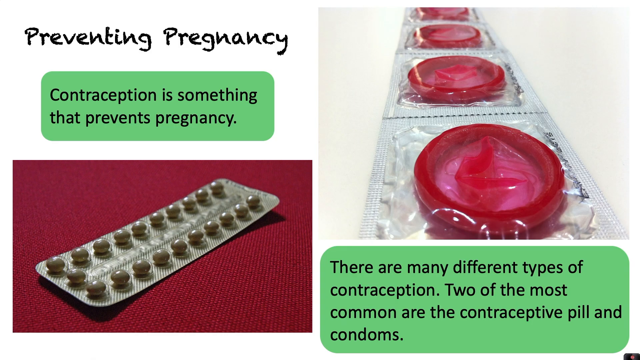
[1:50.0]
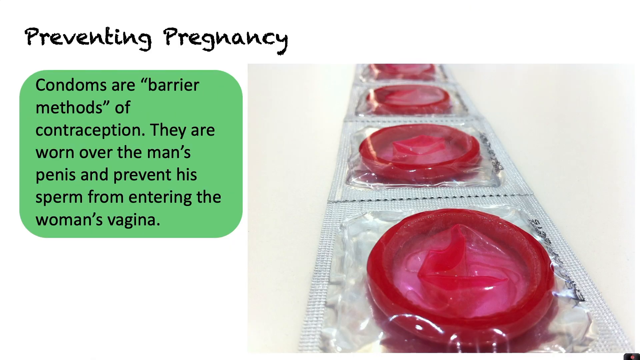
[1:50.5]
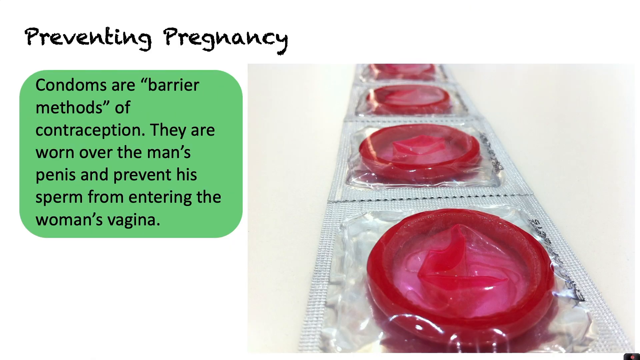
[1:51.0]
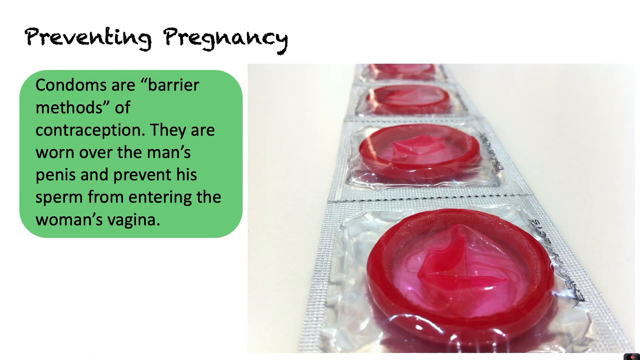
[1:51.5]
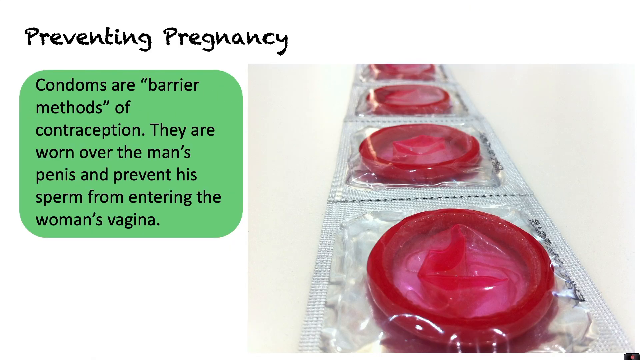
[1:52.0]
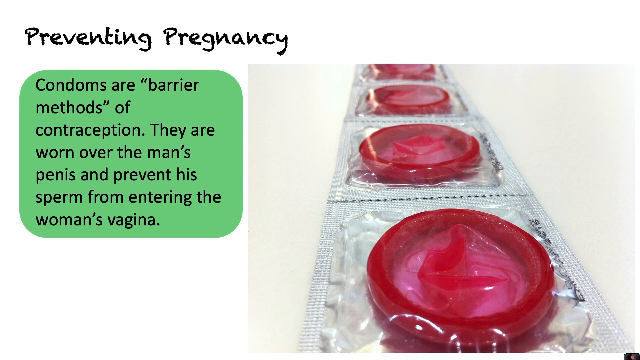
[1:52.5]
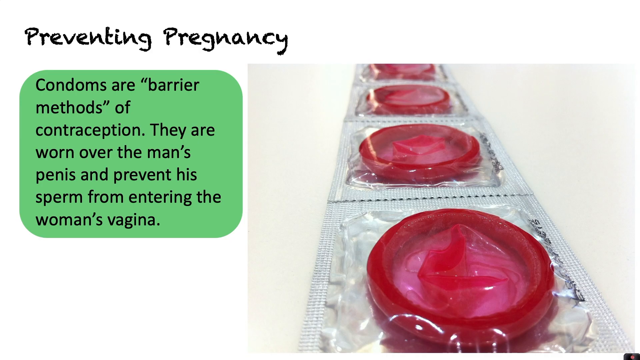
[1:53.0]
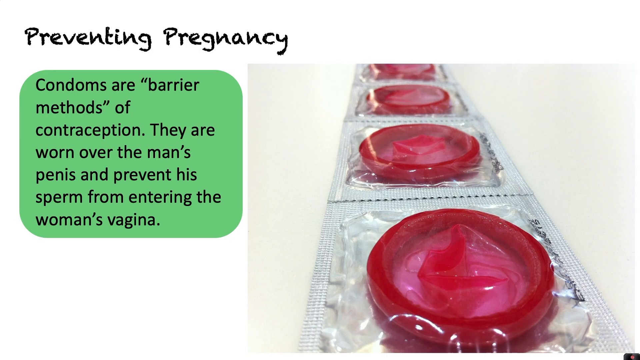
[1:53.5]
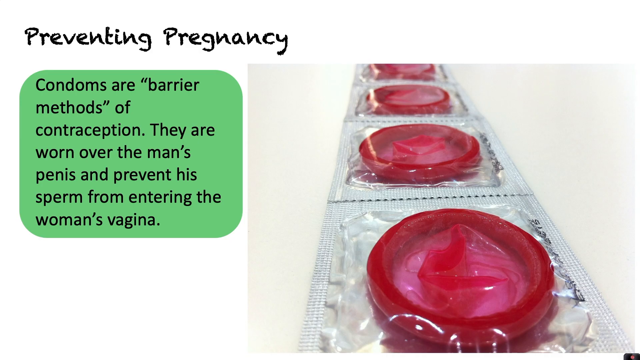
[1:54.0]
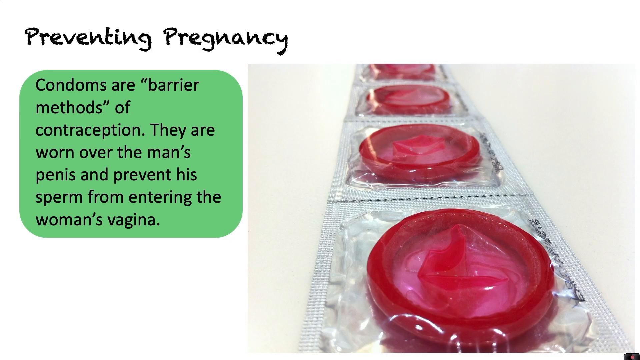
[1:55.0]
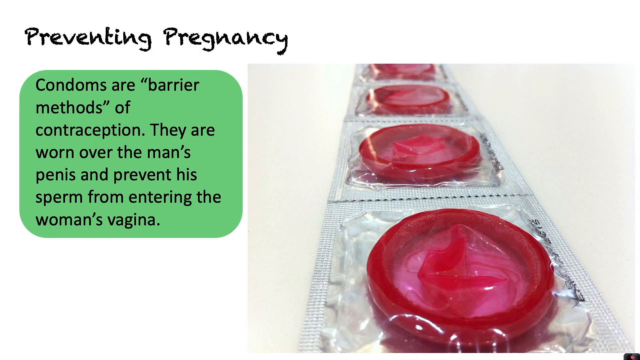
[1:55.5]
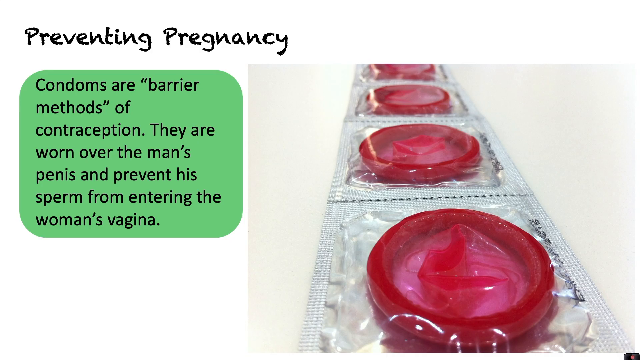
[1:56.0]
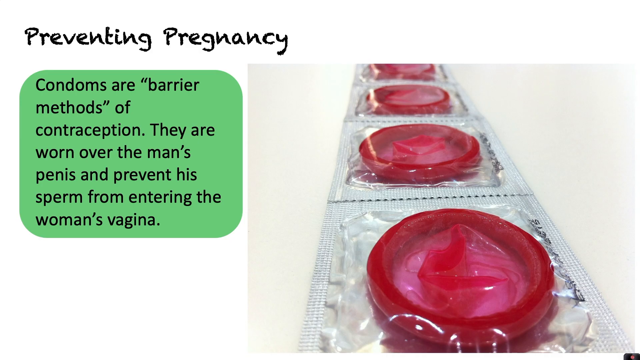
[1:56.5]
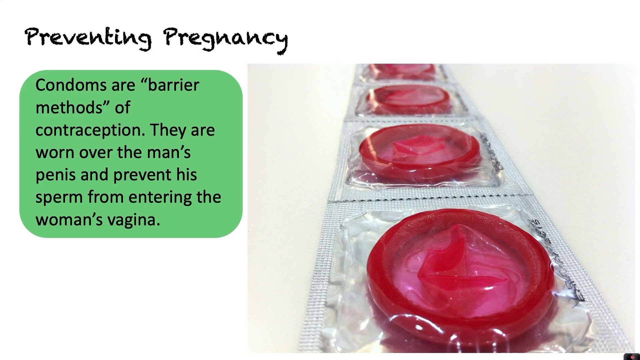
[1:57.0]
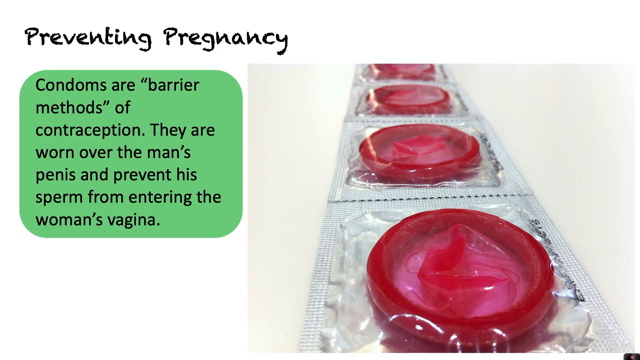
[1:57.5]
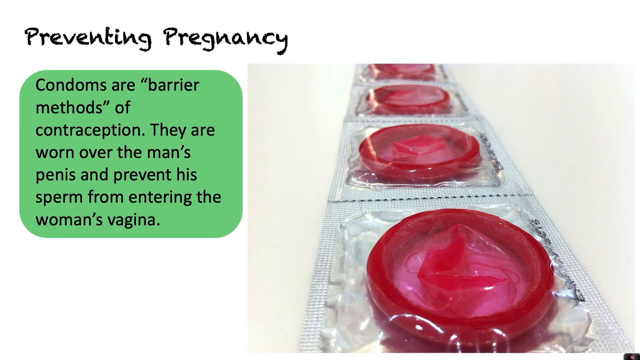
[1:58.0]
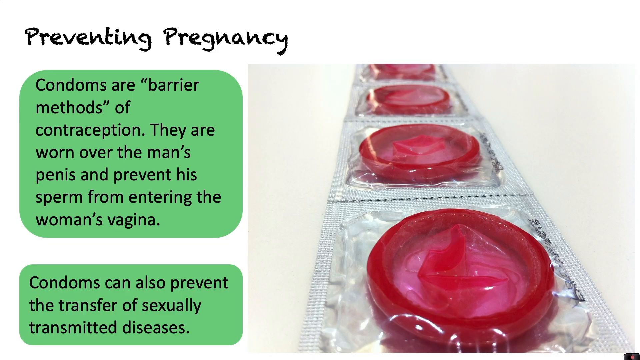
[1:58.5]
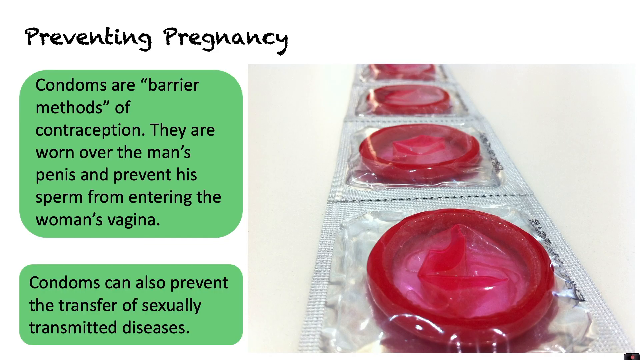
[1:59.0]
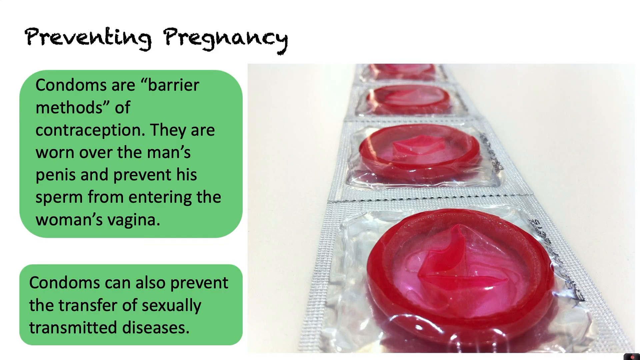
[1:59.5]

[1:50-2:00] A slide with a white background shows a large image on the right side of a strip of red condoms in square silver packaging, four of them connected, against the white background. At the top left, black text reads "Preventing Pregnancy." Below it, a light green box with rounded corners contains black text reading "Condoms are "barrier methods" of contraception. They are worn over the man's penis and prevent his sperm from entering the woman's vagina." After a few seconds, a smaller green box pops up underneath reading "condoms can also prevent the transfer of sexually transmitted diseases."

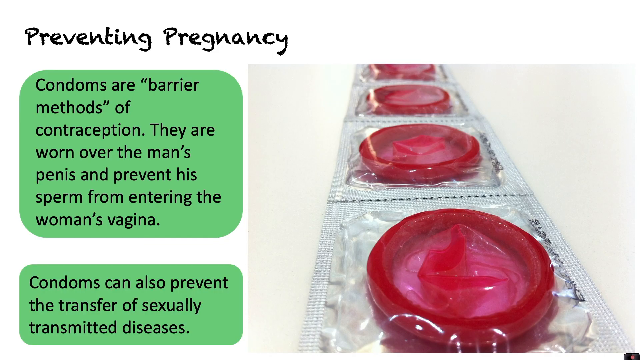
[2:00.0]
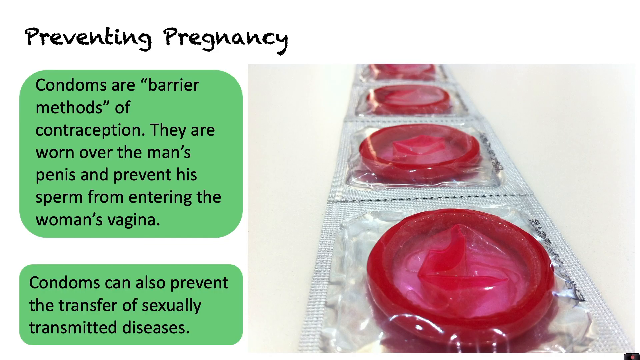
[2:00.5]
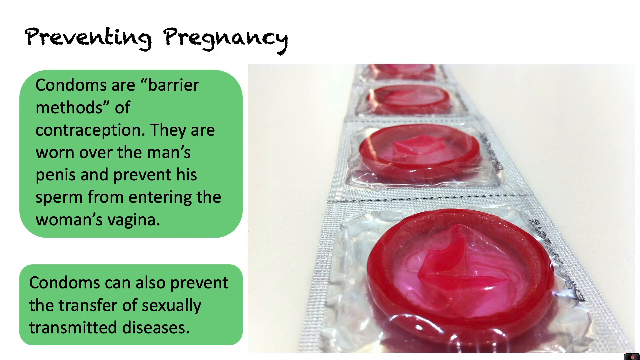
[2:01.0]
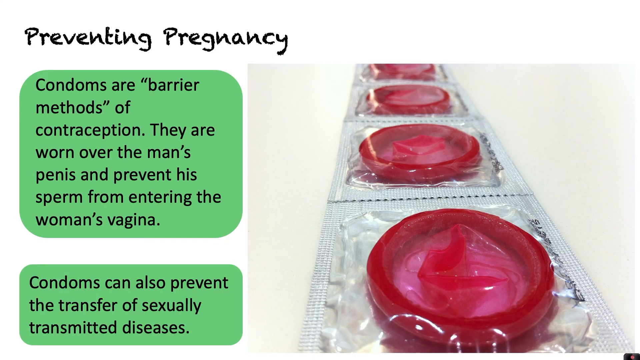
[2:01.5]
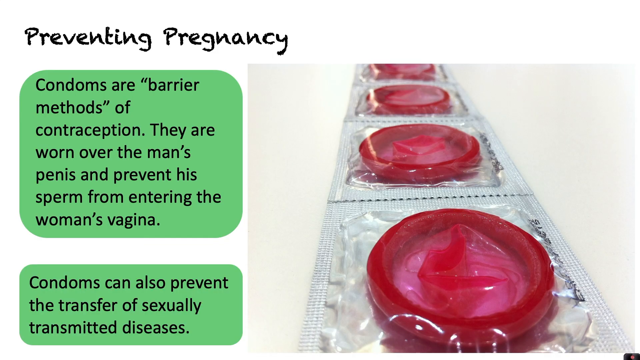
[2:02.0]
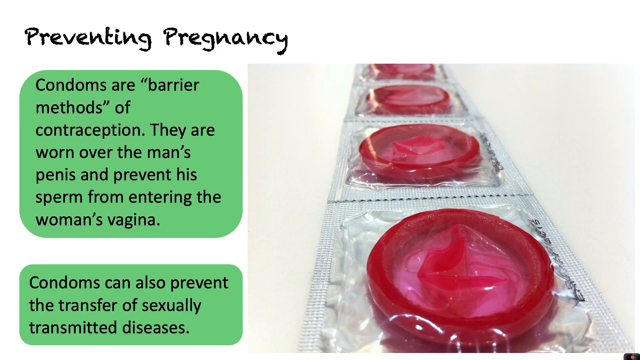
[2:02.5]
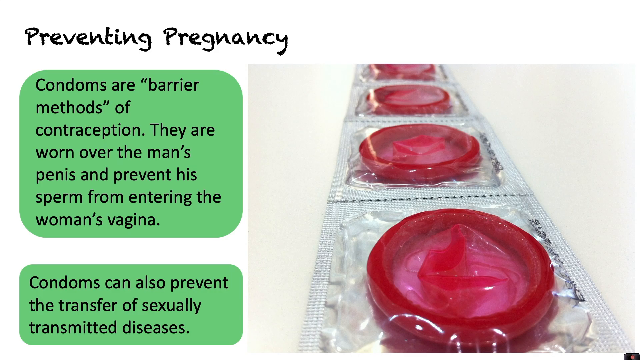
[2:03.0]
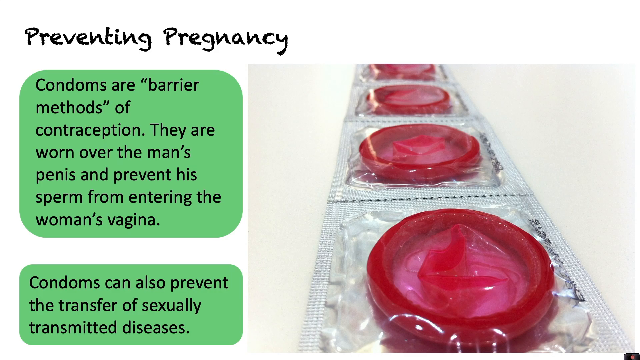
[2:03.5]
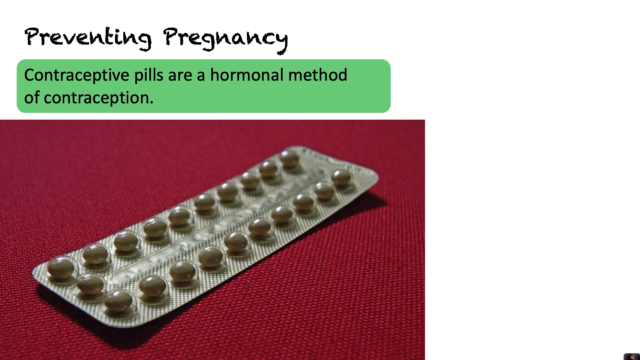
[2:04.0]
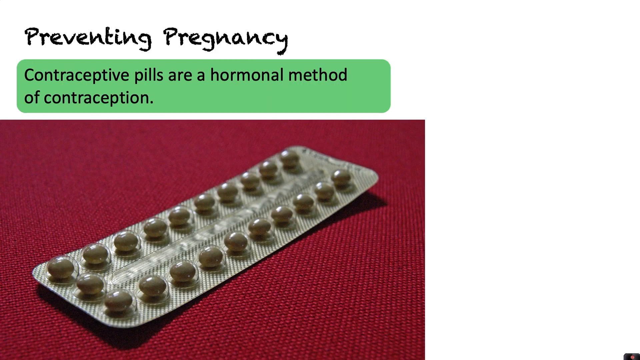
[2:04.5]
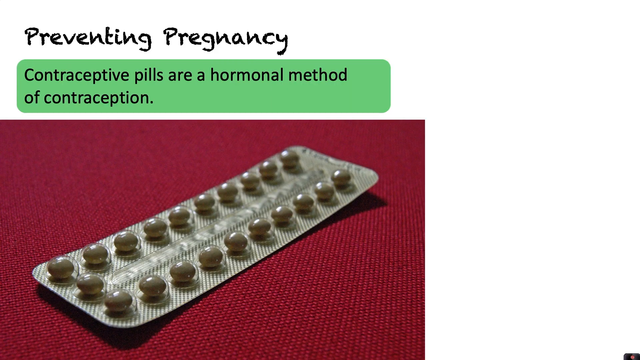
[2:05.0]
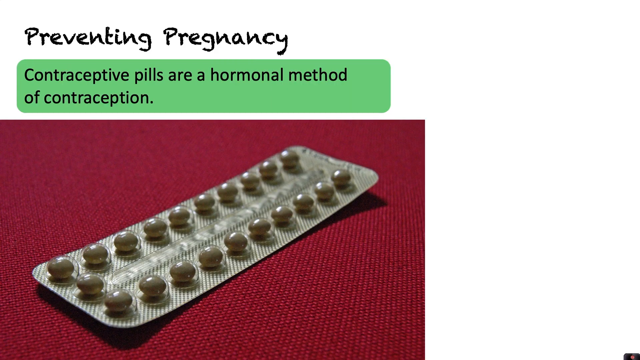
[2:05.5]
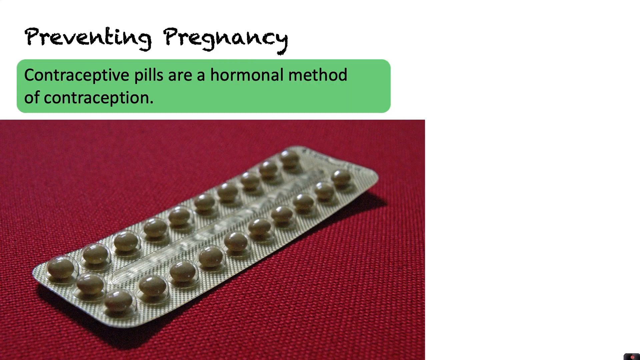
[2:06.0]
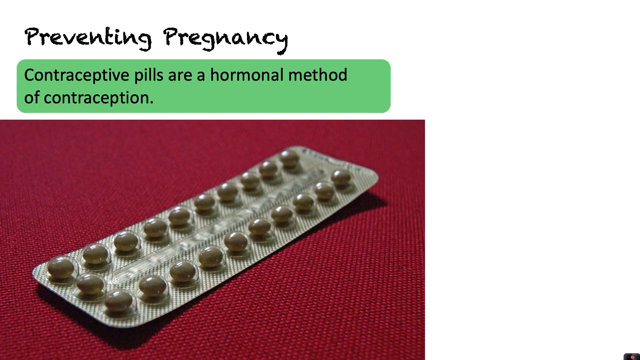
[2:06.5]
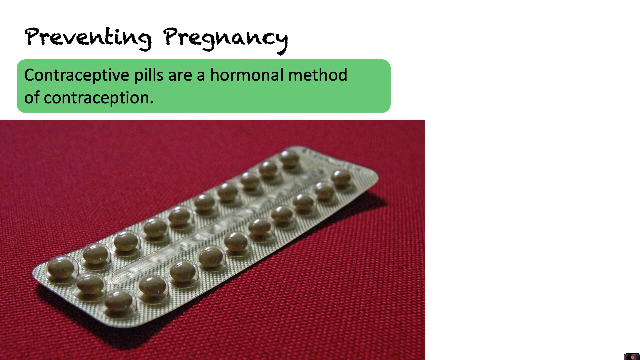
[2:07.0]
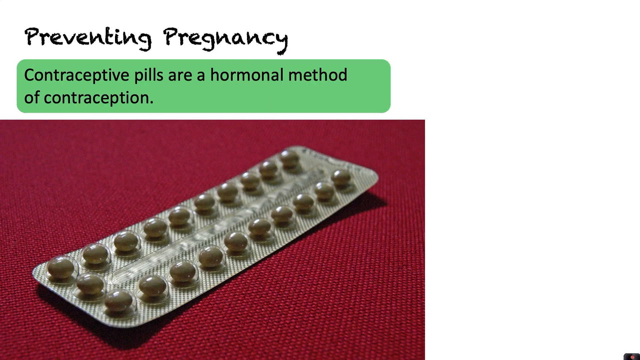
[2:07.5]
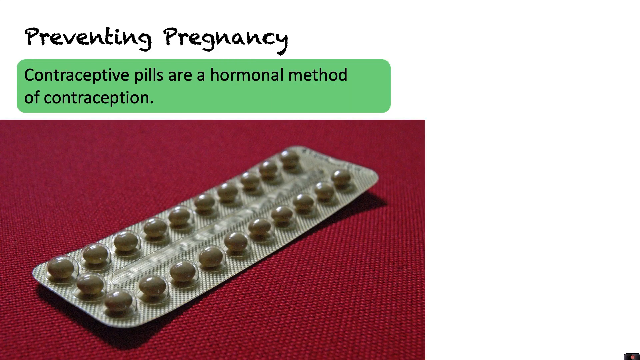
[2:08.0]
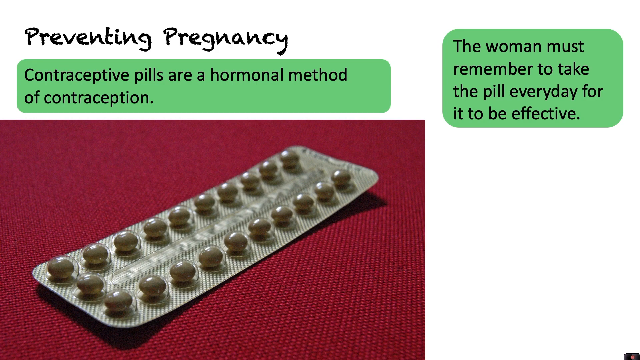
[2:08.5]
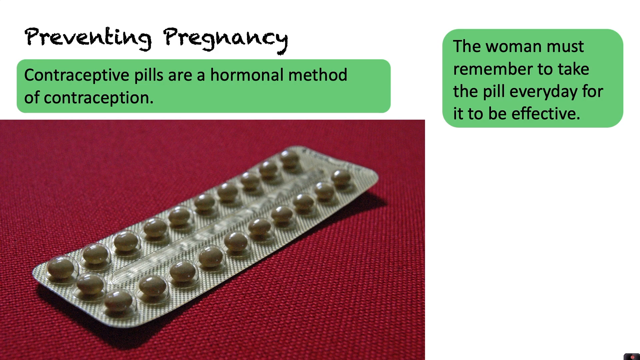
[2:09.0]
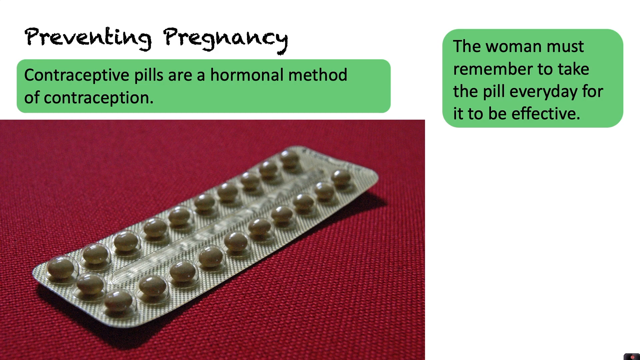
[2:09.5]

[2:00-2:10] A slide with a white background has black text in the top left corner reading "Preventing Pregnancy." Below it, a small light green box contains black text reading "Condoms are "barrier methods" of contraception. They are worn over the man's penis and prevent his sperm from entering the woman's vagina." Beneath that, a smaller green box reads "condoms can also prevent the transfer of sexually transmitted diseases." On the right side of the slide is a large image of a strip of four red condoms in small silver square packages, all connected on a long strip. The next slide still reads "preventing pregnancy" at the top, with a green box beneath reading "contraceptive pills are a hormonal method of contraception." Below that is a large image of birth control pills: a long rectangular strip with many small round gray pills sitting on a red fabric background. A green box then pops up in the top right corner with black text reading "The woman must remember to take the pill every day for it to be effective."